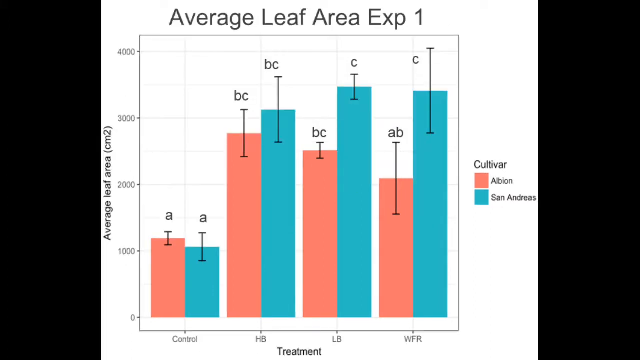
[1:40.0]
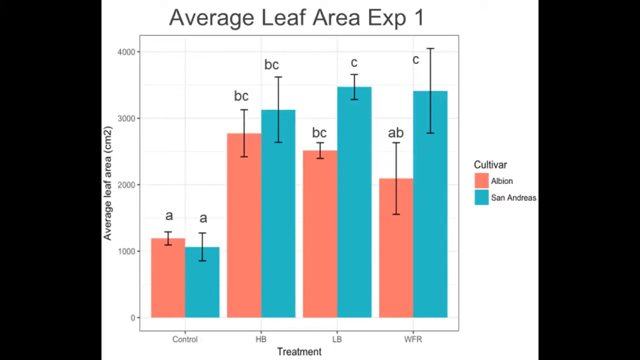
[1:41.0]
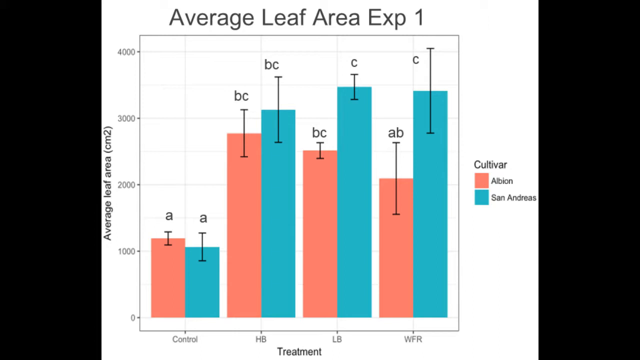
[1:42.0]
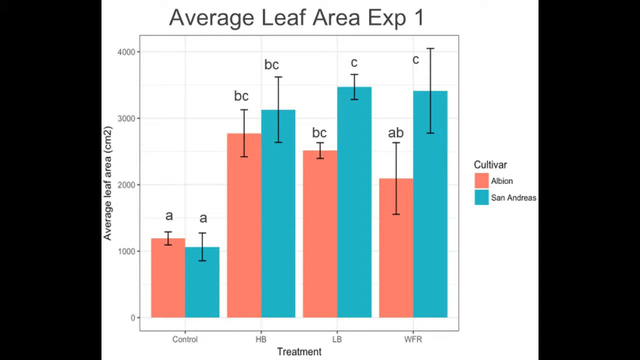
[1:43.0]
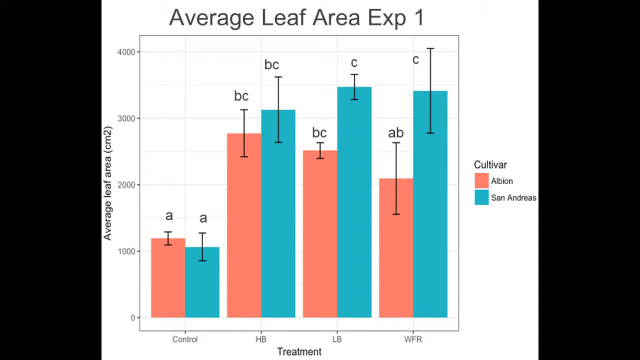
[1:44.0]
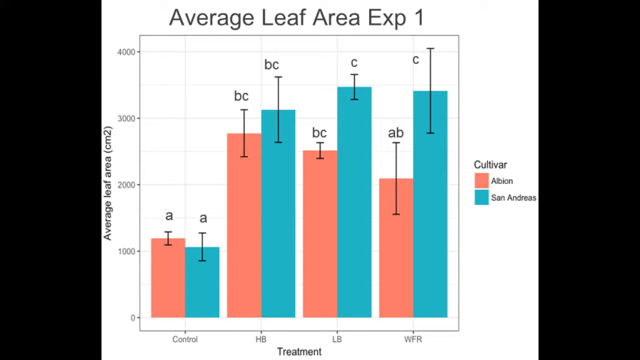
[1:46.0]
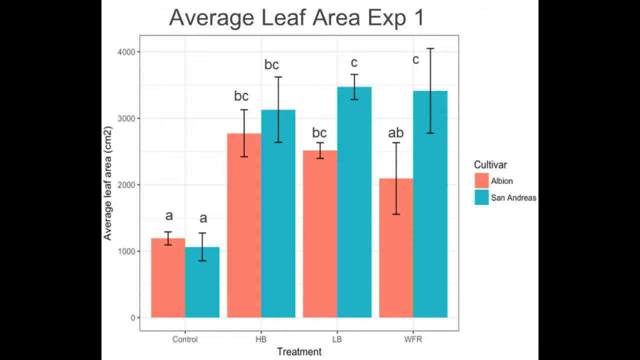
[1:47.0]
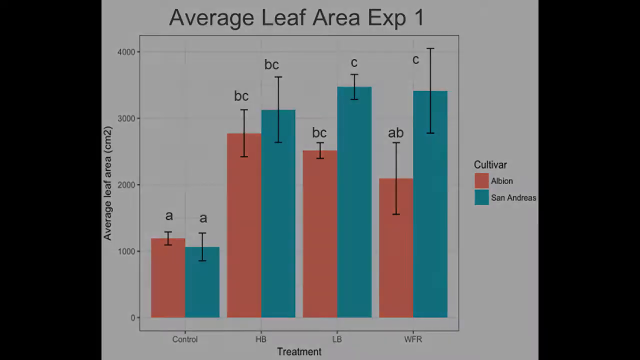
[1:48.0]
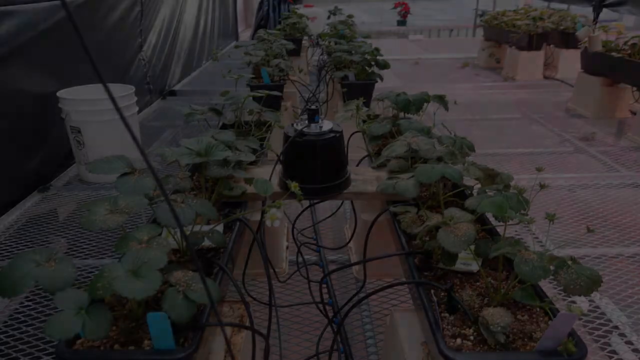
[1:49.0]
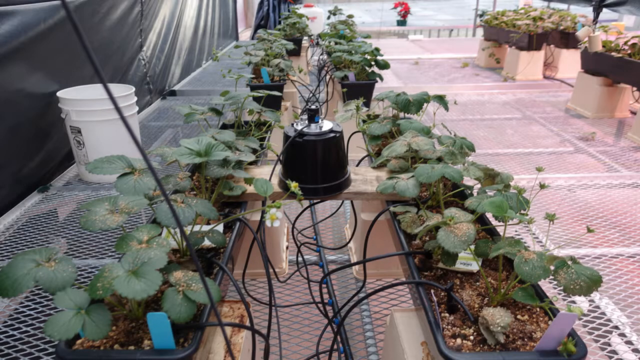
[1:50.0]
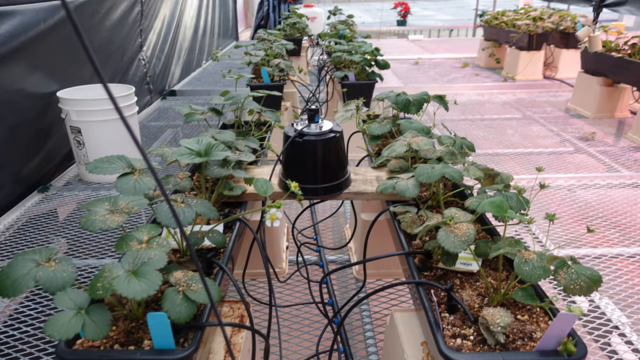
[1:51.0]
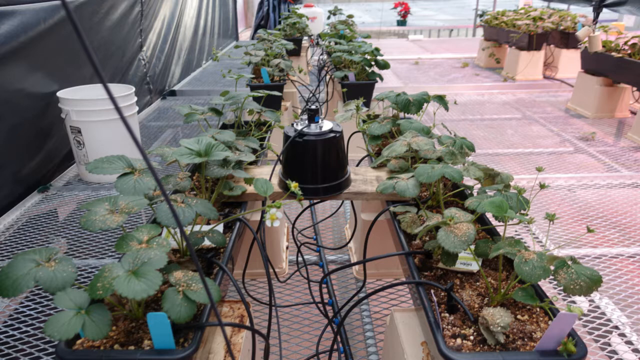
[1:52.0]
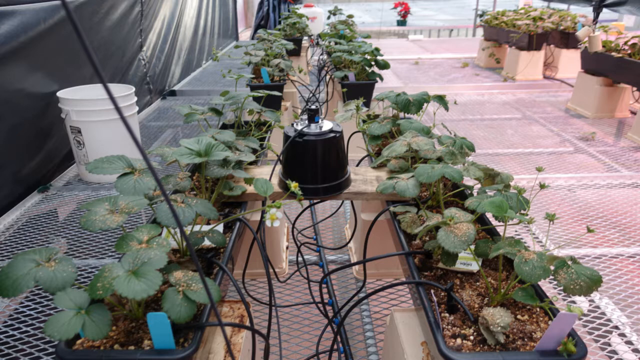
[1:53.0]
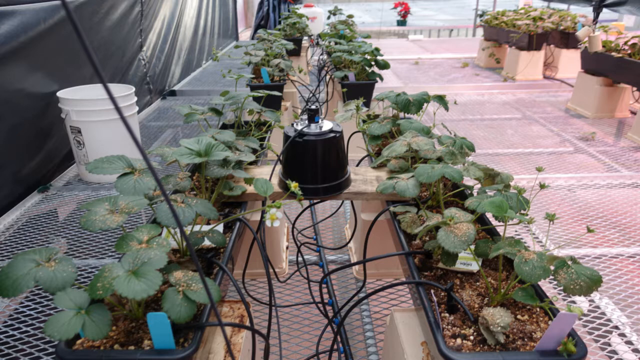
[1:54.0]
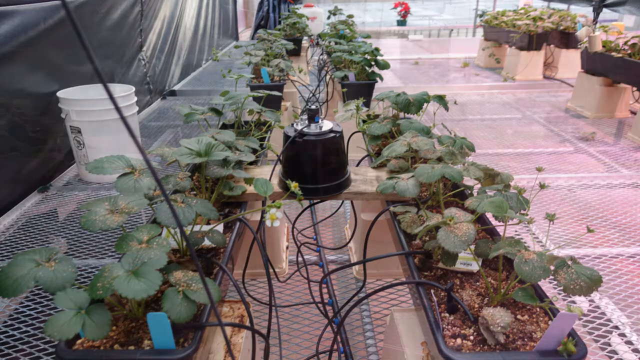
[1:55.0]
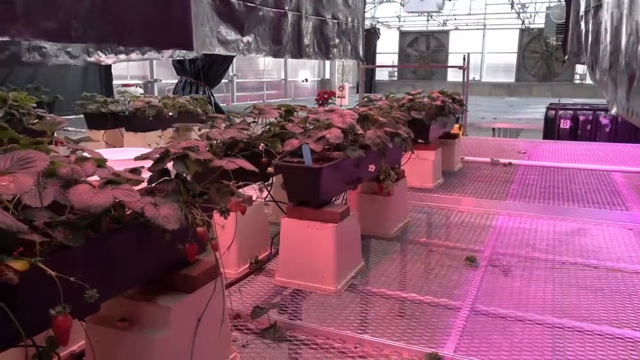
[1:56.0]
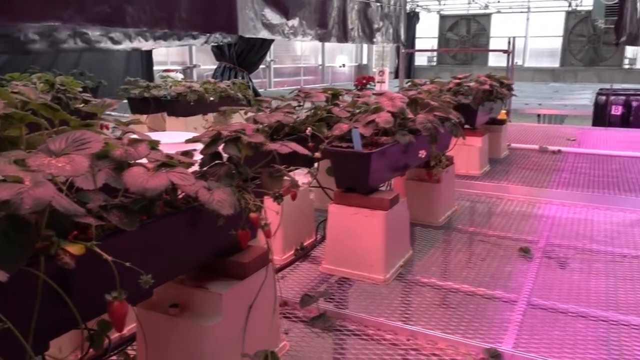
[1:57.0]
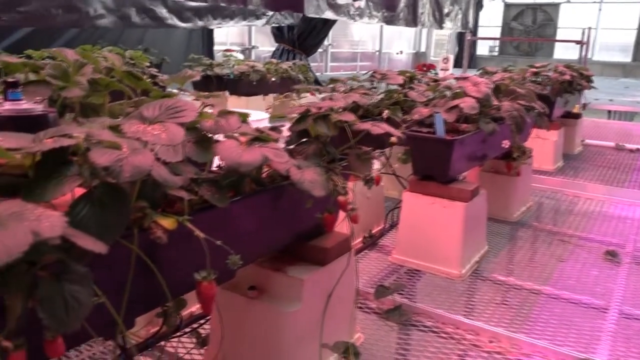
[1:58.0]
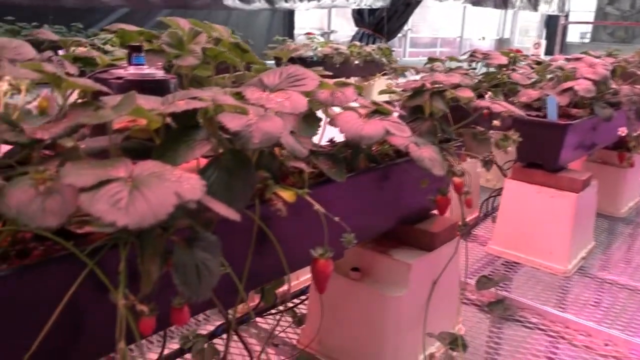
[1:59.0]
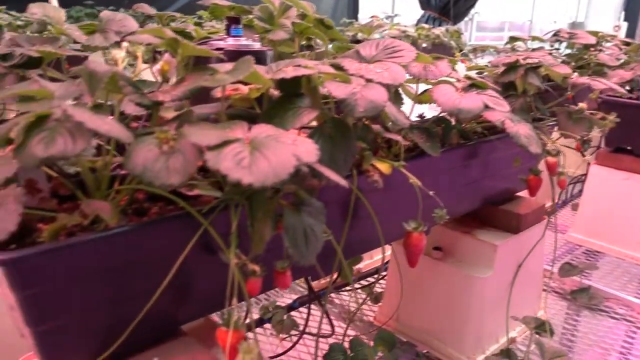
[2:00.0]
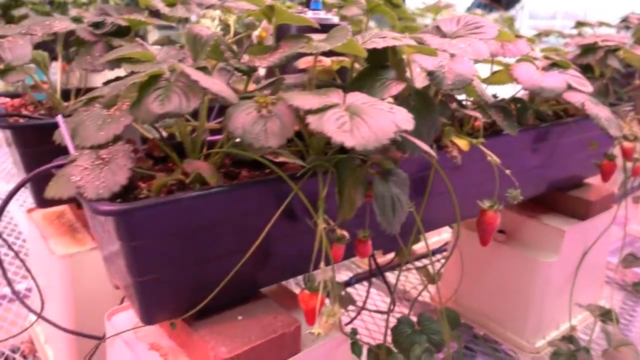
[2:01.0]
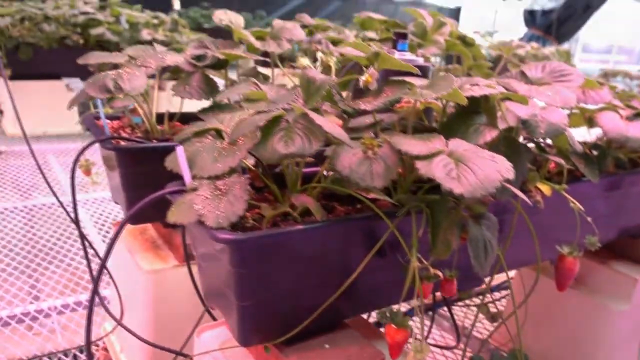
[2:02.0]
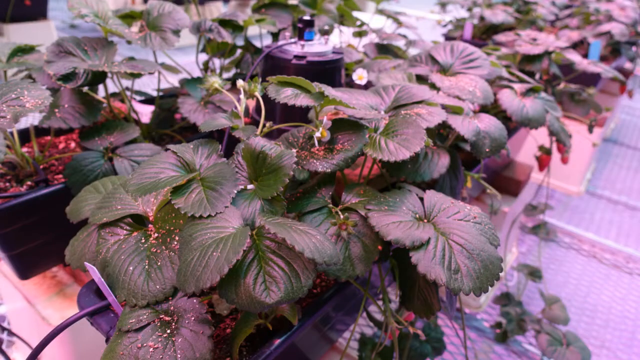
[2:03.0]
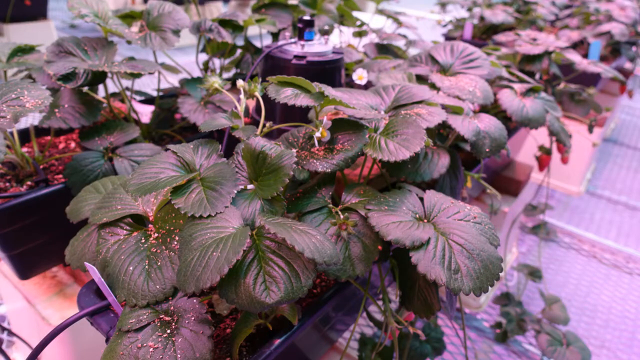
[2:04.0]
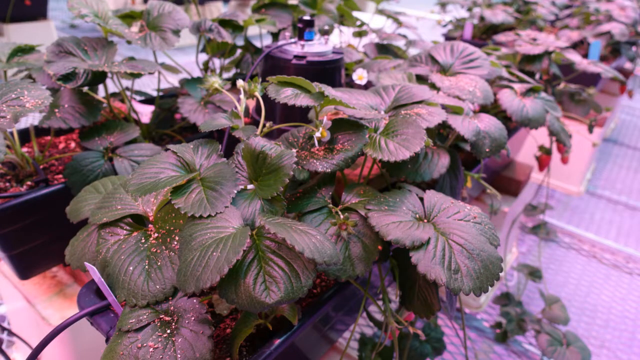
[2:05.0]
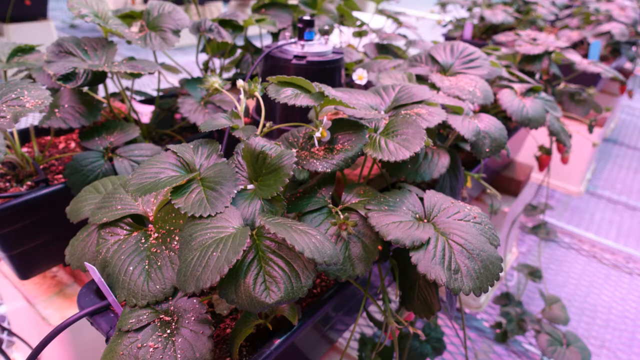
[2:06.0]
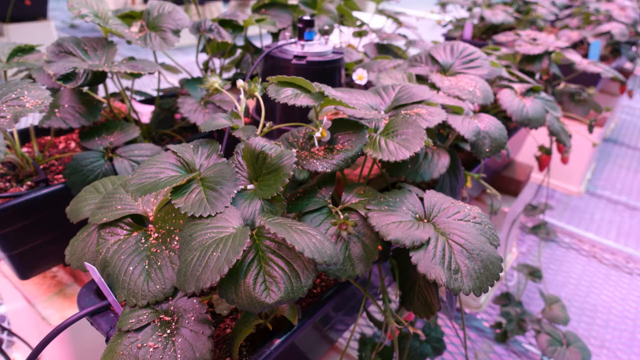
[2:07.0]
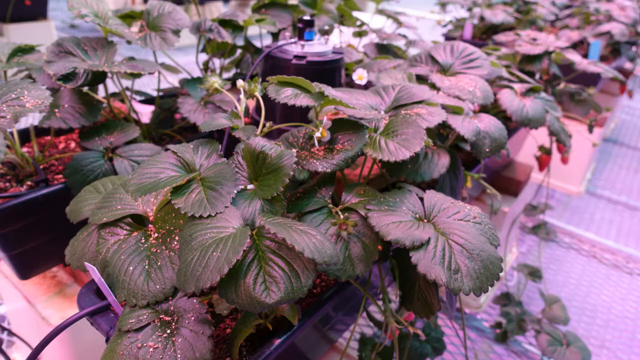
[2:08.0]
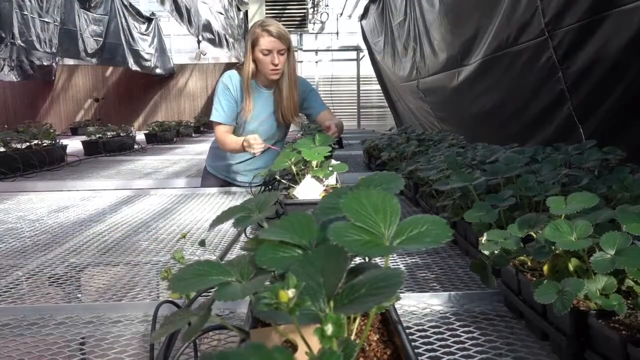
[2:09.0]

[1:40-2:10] A different scene shows a whole bunch of planter boxes spread out on what look like elevated sections. In the middle is an upside-down black bucket with some sort of electronic device on it, from which many black wires, cords or tubes stick out and go off to different areas of the planter boxes, which have many green plants growing out of them. Another view of the planter boxes inside the greenhouse shows two large fans to the far right and a large group of elevated planter boxes with many green plants to the left. The view turns to the left, showing red strawberries growing out of the planter boxes, and continues to the left. A still image then gives a close-up view of the planter boxes, with very dark green leaves and the upside-down black bucket in the upper area between the planter boxes. In a different scene, a woman brushes the plants or flowers of the planter boxes, with some planter boxes to the right and a row of planter boxes next to her. She wears a light blue shirt and a black bracelet on her right wrist and has straight blonde hair.